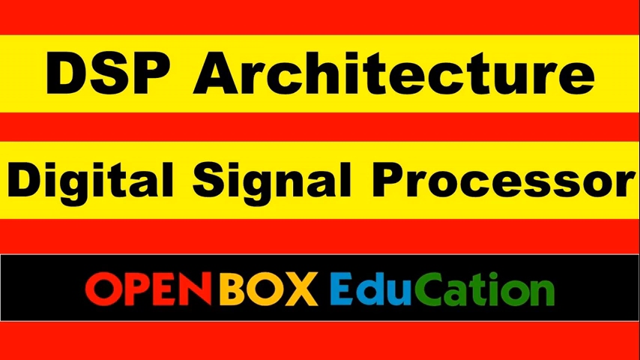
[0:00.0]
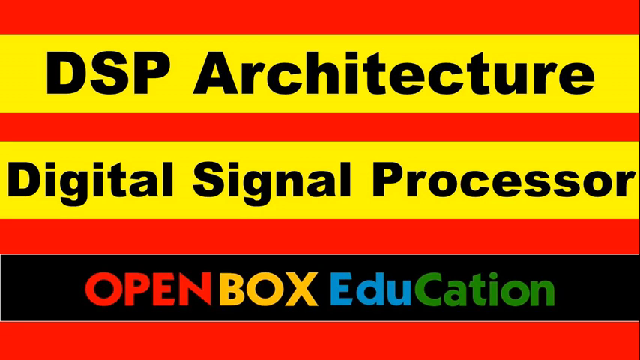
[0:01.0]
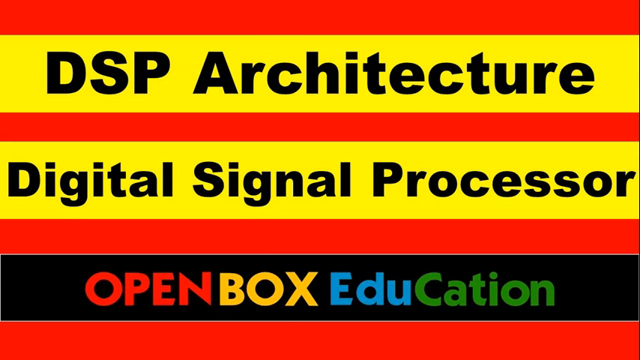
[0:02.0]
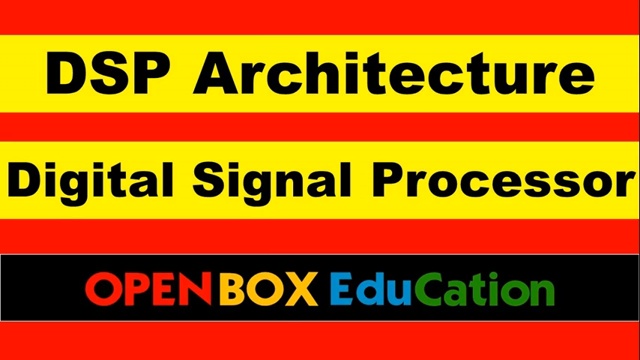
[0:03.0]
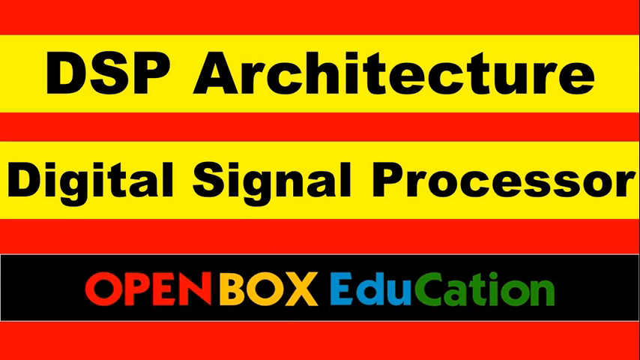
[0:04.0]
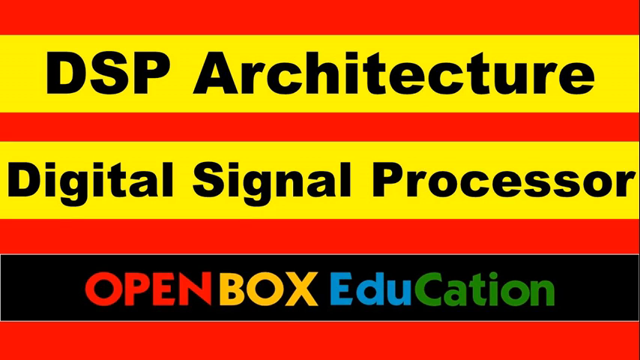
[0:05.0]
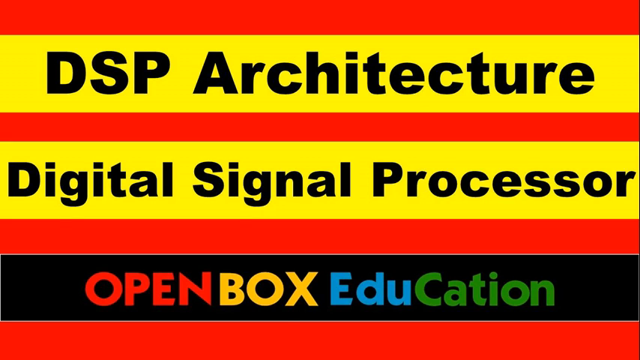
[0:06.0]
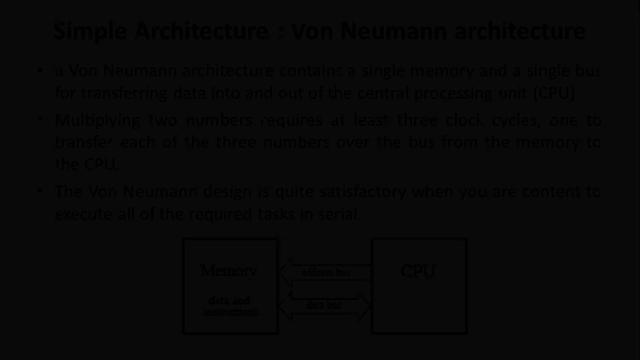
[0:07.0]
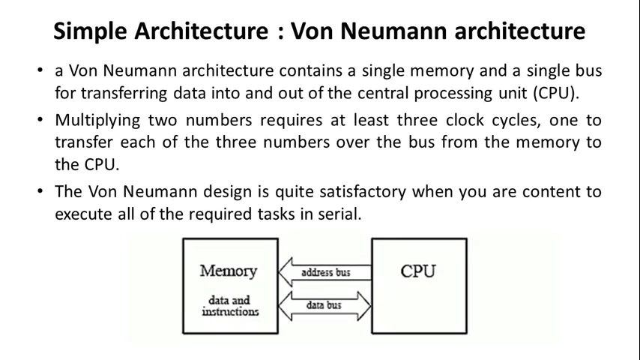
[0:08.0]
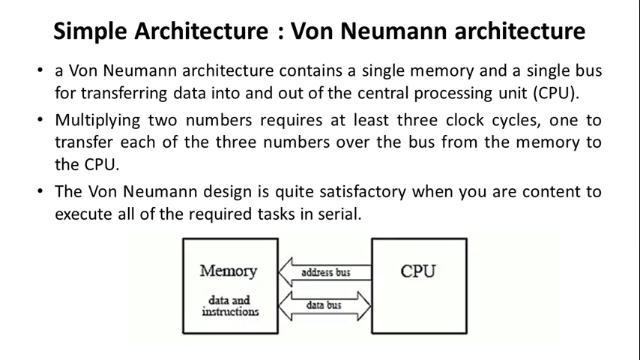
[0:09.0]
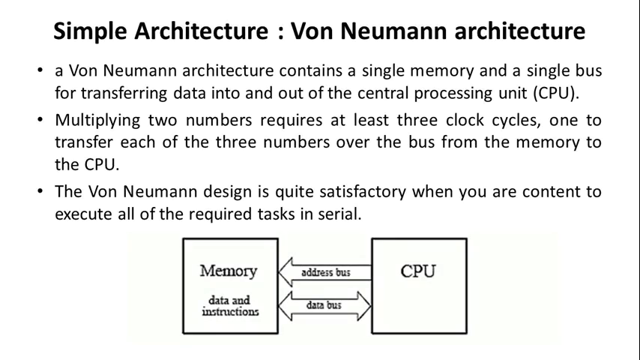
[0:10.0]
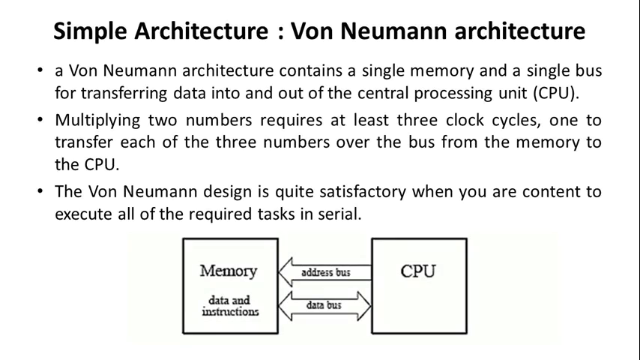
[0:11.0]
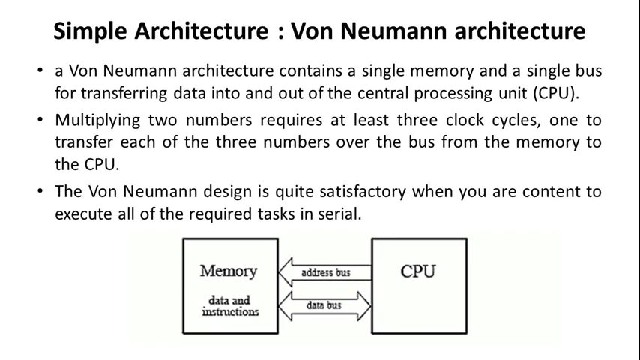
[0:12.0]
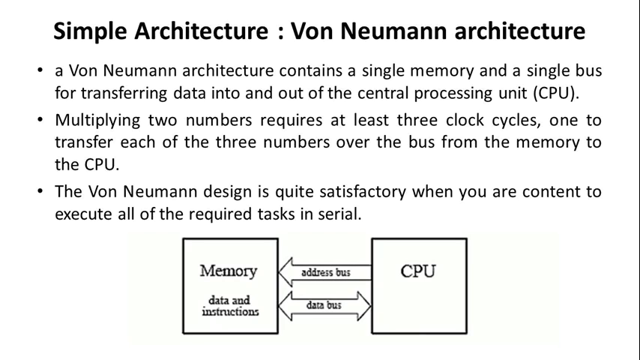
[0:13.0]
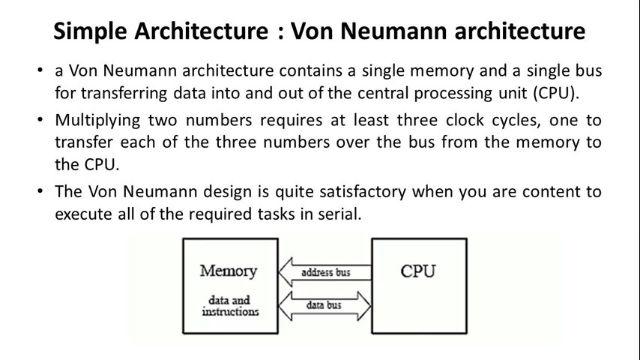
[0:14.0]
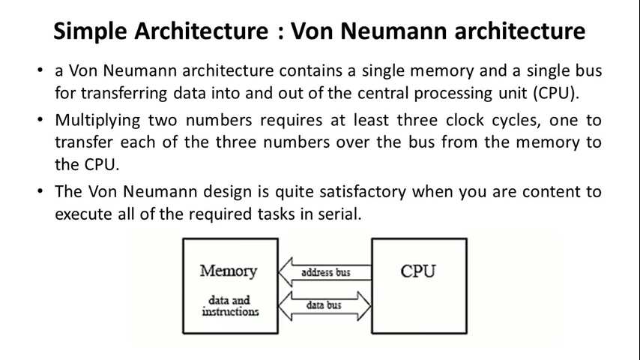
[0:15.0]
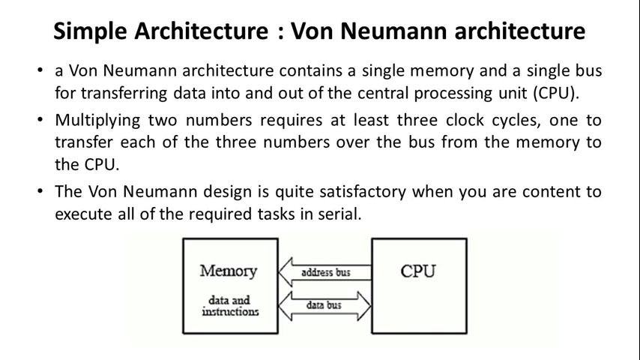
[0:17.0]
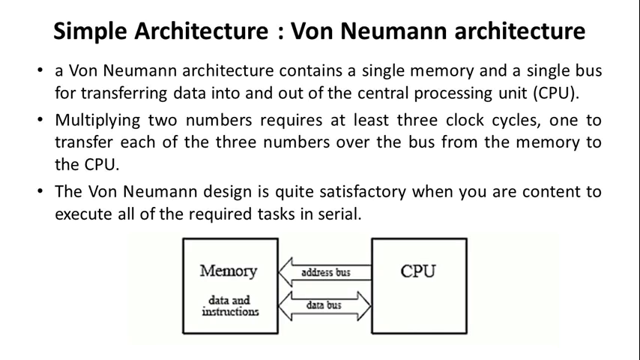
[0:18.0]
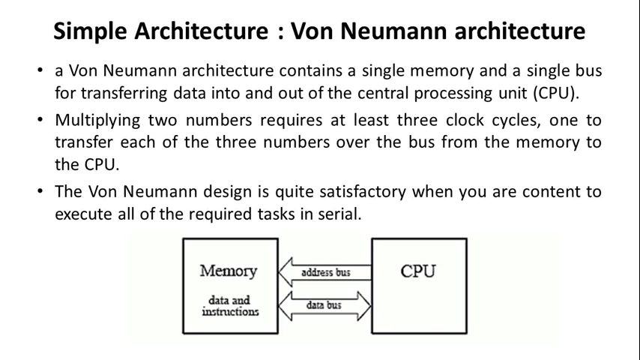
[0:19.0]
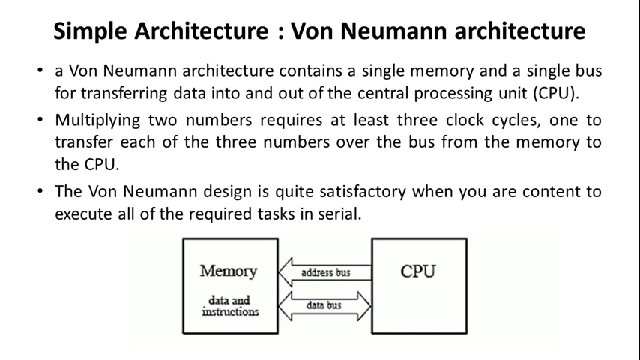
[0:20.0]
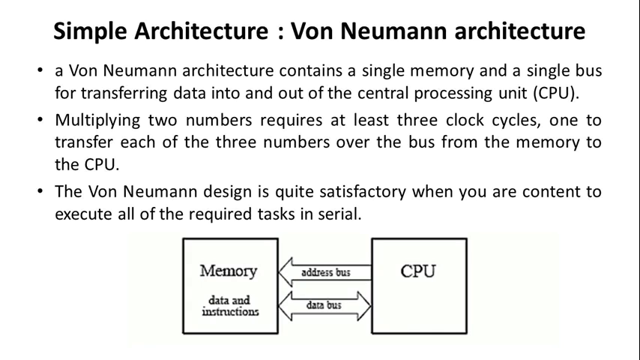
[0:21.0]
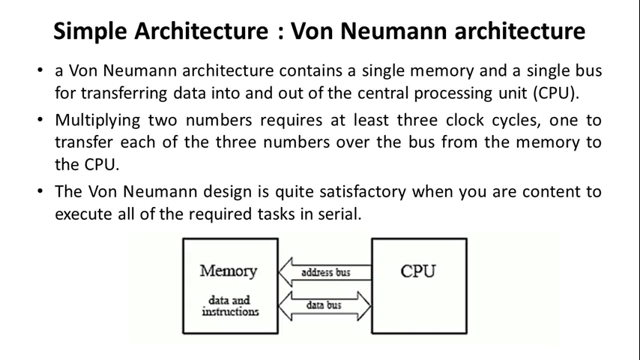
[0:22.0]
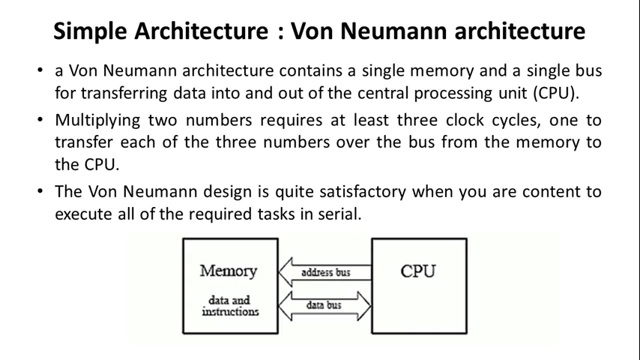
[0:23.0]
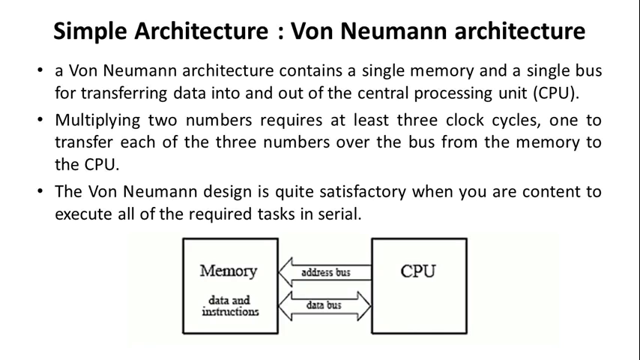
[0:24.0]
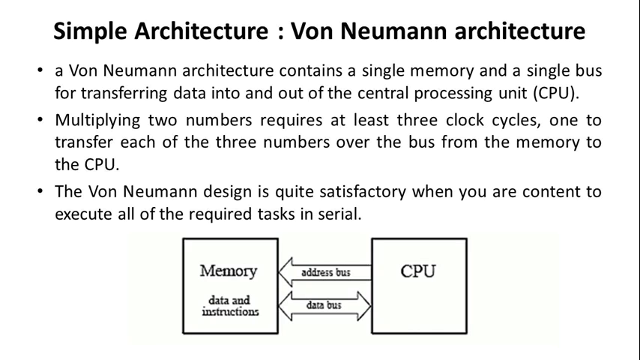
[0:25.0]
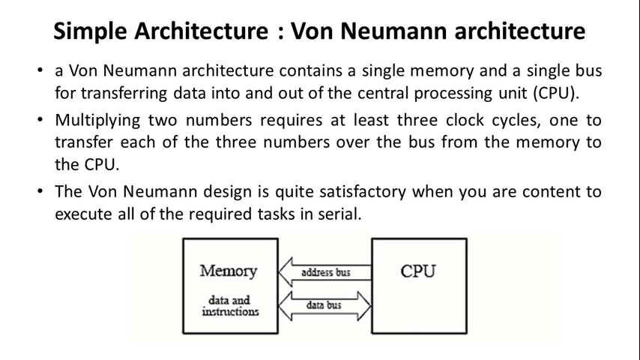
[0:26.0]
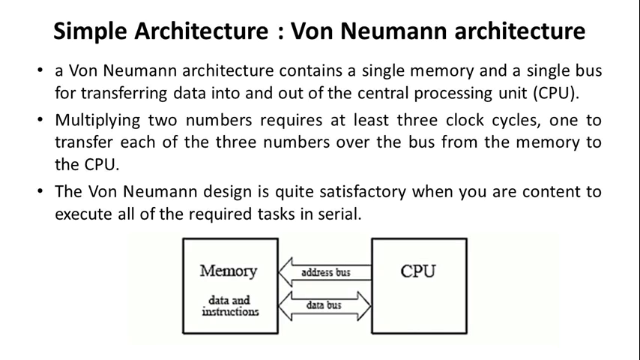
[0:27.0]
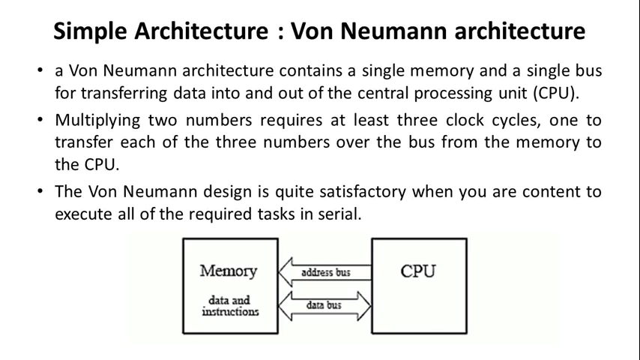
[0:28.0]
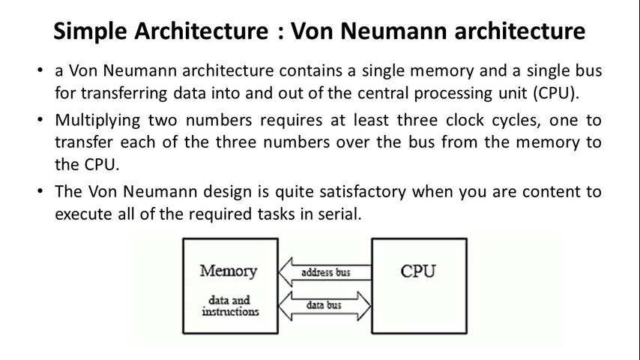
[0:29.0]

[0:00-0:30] The video opens with the text "DSP Architecture Digital Signal Processor" in black on a red and yellow background, with multicolored text at the bottom that says "Openbox Education." This title screen changes to black text on a white background with the title "Simple Architecture : Von Neumann architecture." The slide has a description of what this Von Neumann architecture is and how it is related to a CPU. It identifies what the architecture contains, how many clock cycles are required and for what purpose, and when the design is satisfactory (when you are content to execute all of the required tasks in serial). Three different points are listed, along with a diagram showing the connection between memory and a CPU, with arrows going between them. Everything is shown on the computer directly; nothing is live and no people are seen.